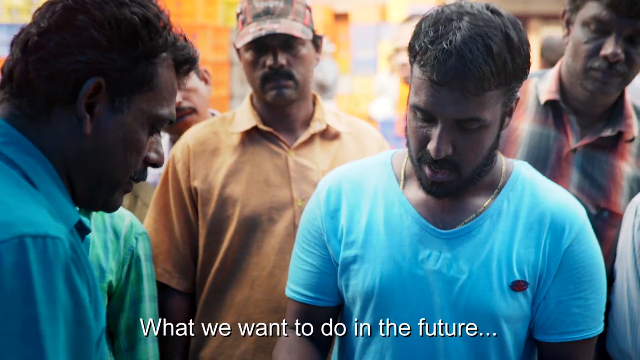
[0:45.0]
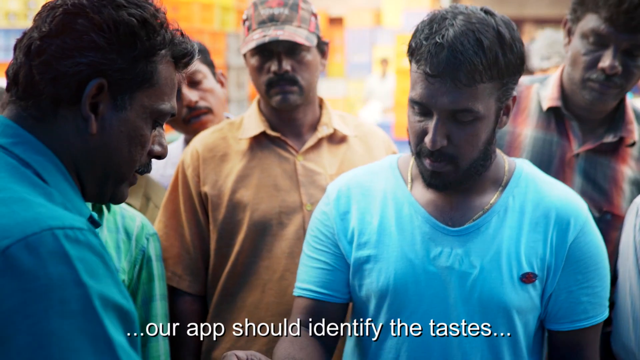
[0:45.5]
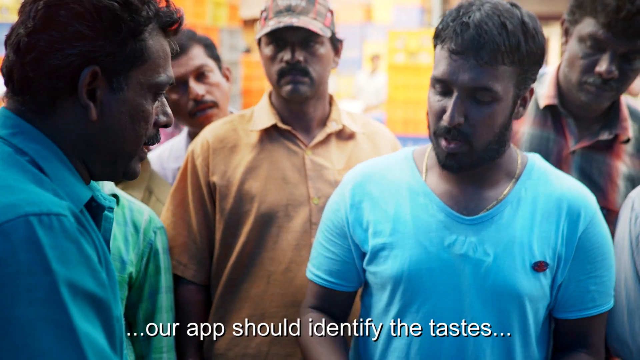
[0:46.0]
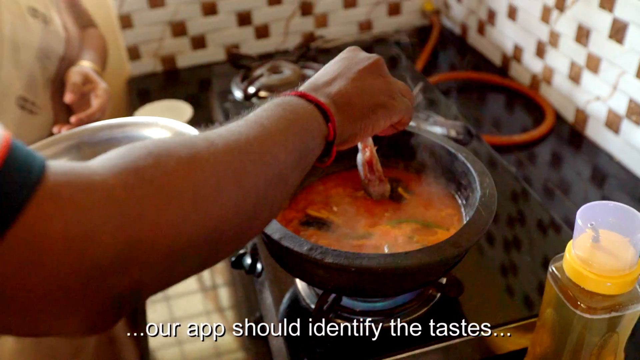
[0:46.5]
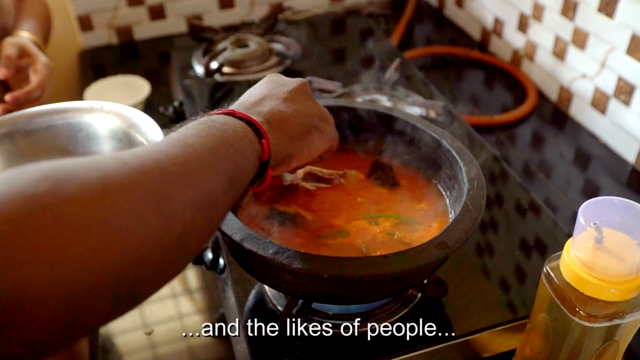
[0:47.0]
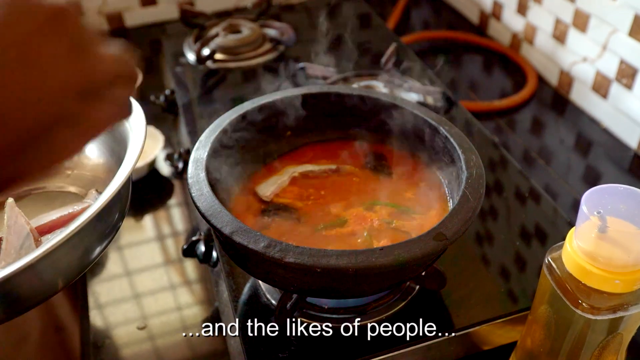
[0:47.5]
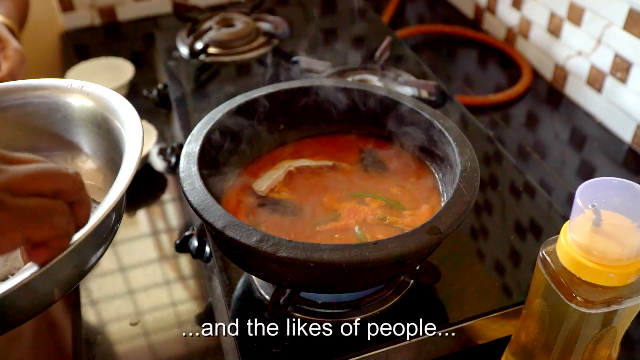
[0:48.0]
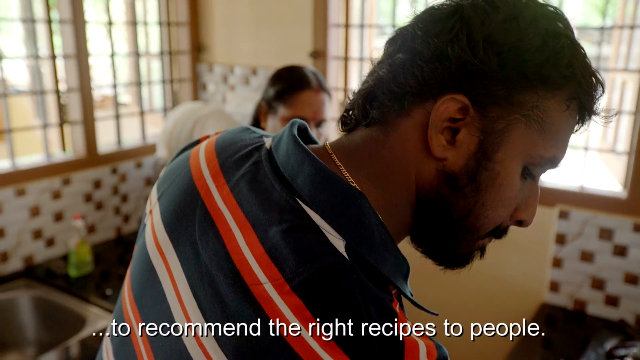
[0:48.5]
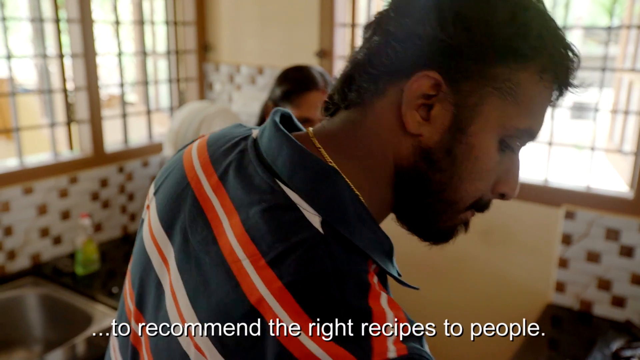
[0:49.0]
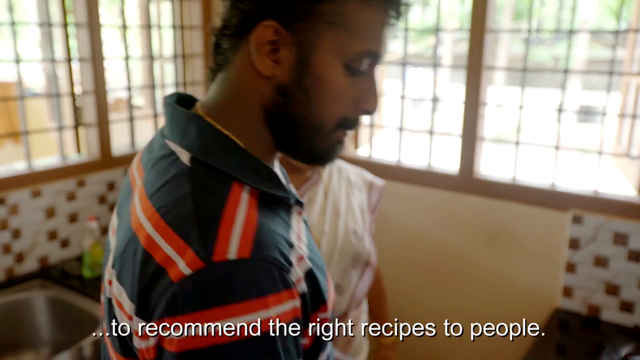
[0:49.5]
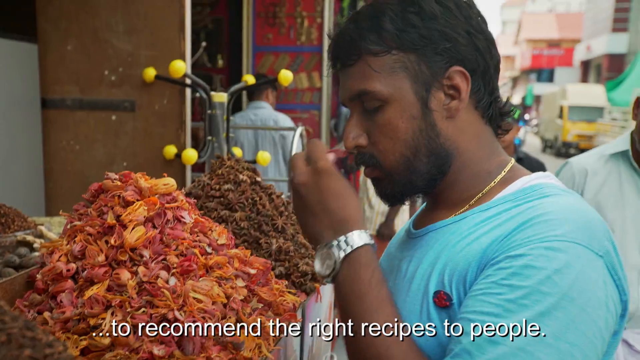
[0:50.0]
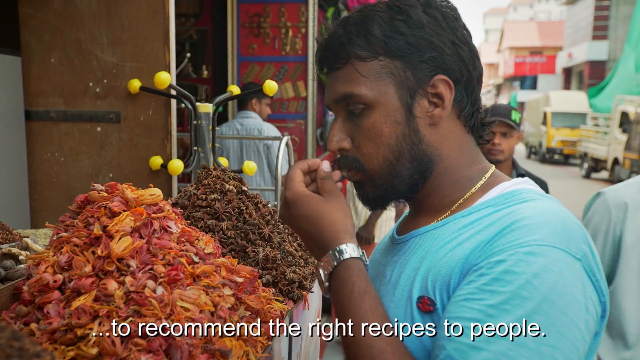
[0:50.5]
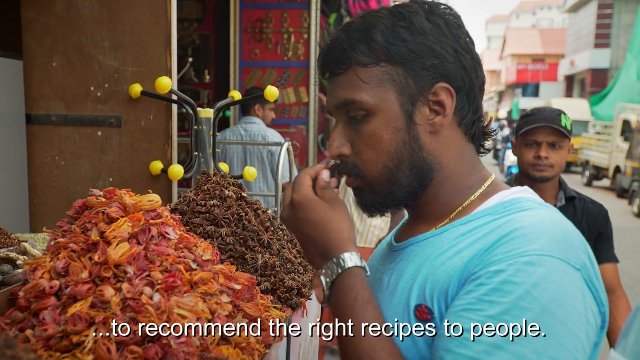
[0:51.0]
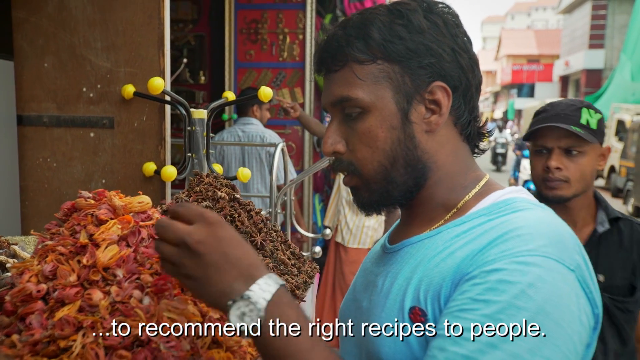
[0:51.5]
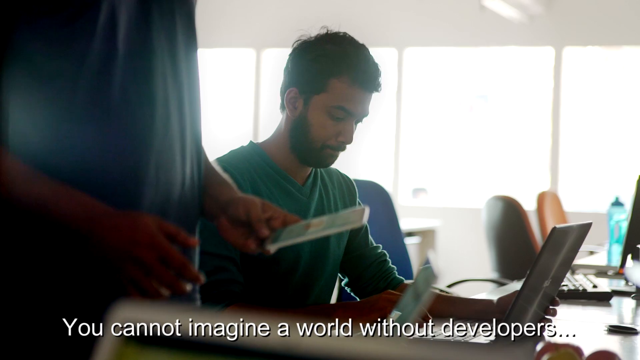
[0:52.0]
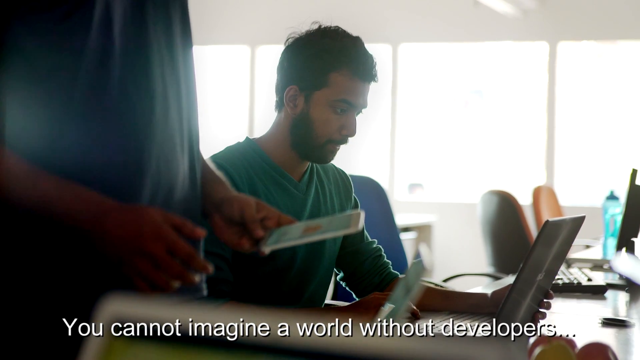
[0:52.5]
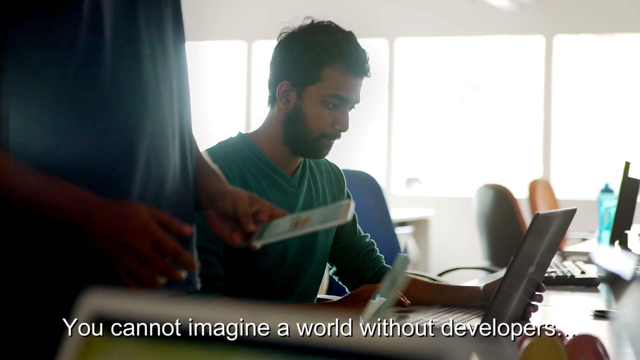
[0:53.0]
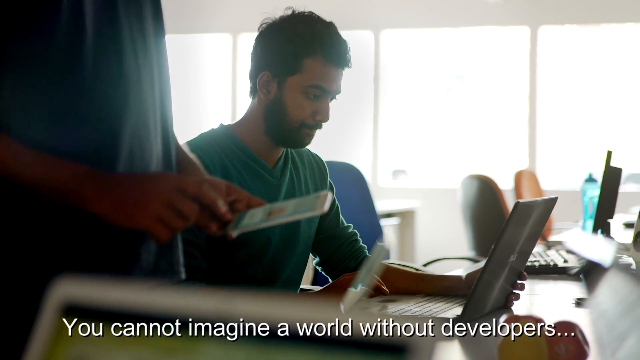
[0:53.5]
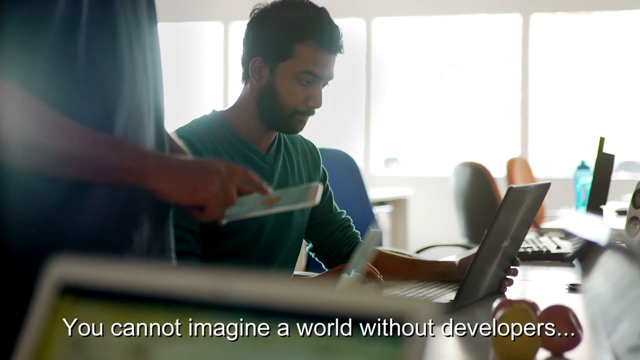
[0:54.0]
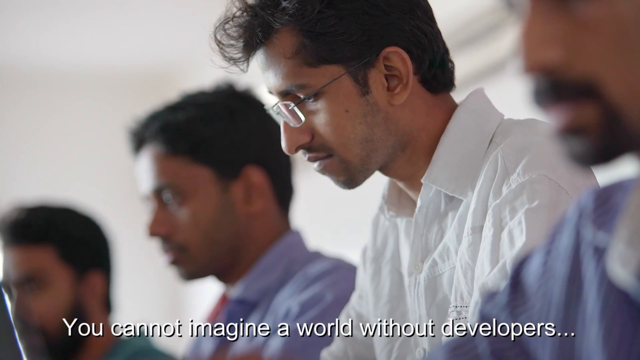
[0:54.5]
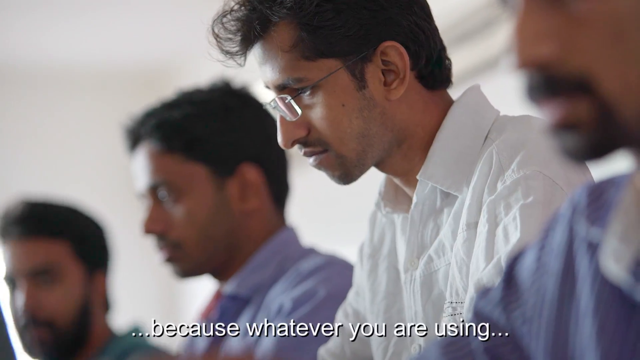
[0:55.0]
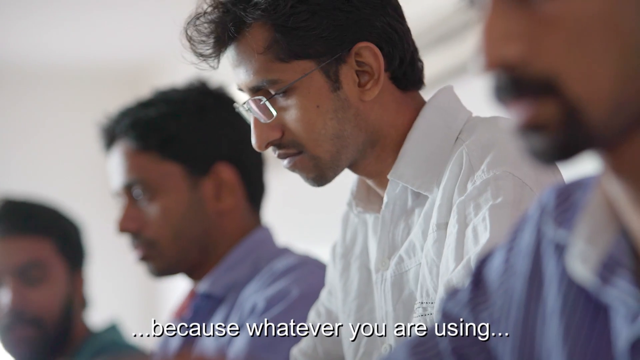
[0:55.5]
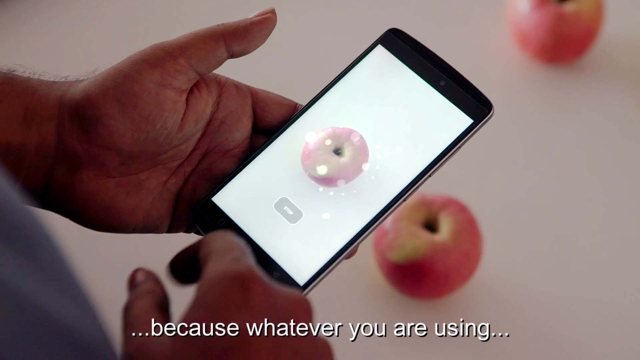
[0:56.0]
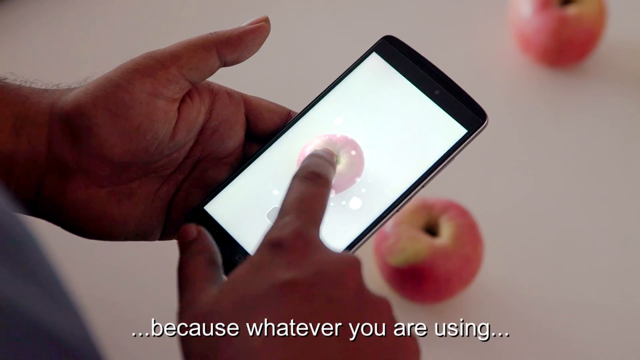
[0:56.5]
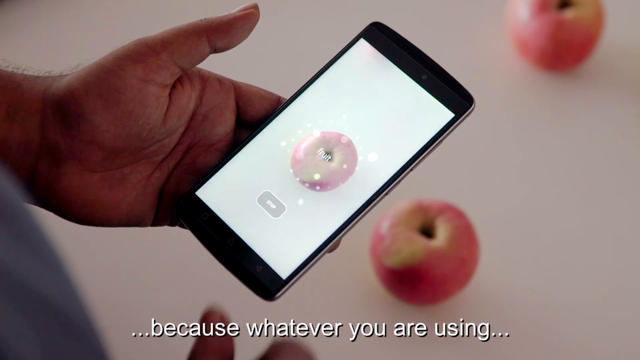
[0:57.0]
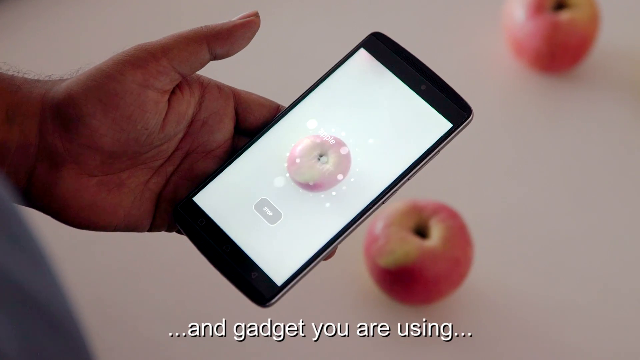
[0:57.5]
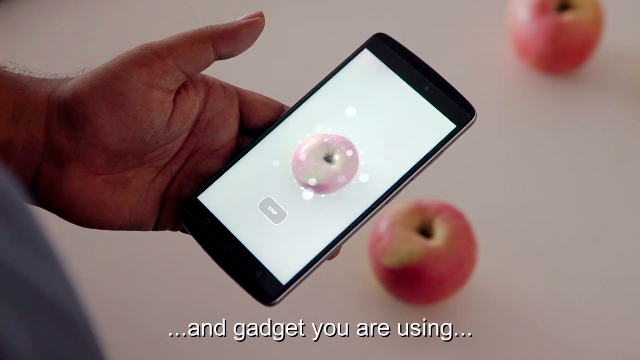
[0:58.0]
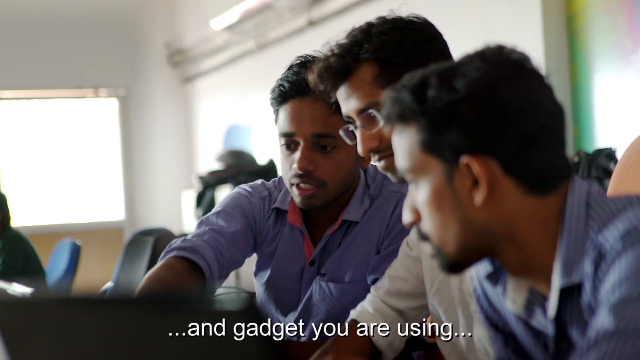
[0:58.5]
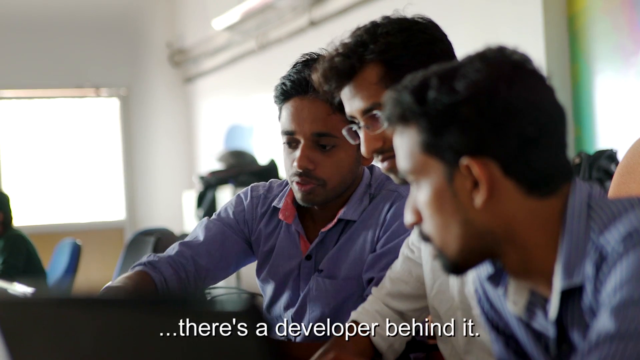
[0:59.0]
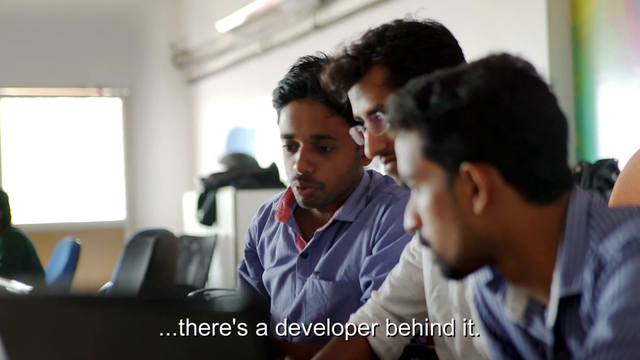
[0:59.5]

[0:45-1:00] Several men in short-sleeved shirts are shown talking. Text below reads "our app should identify the tastes and the likes of people to recommend the right recipes to people," followed by "You cannot imagine a world without developers because whatever you're using, the gadget you're using, there's a developer behind it." While the text is shown, people are cooking, placing things in soup, and shopping, and different young men are shown doing development work. Images of phones also appear.